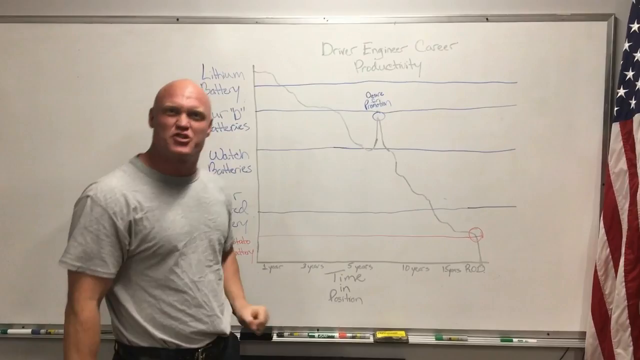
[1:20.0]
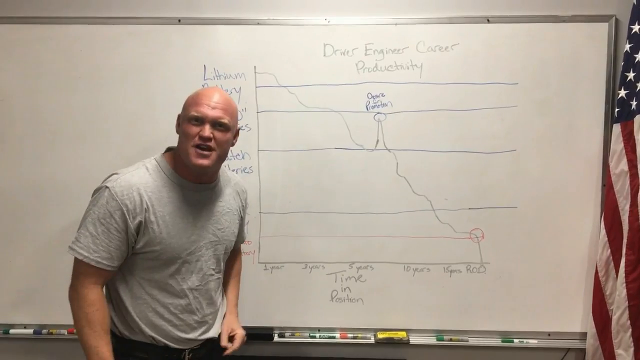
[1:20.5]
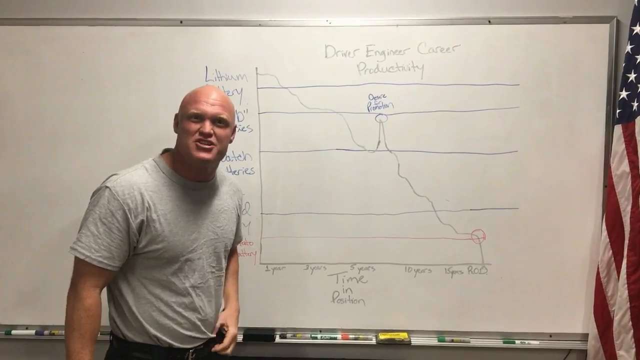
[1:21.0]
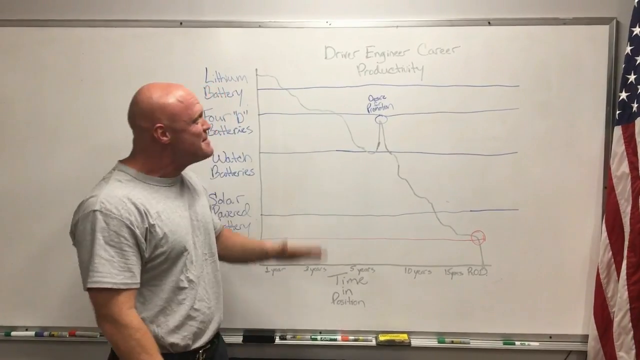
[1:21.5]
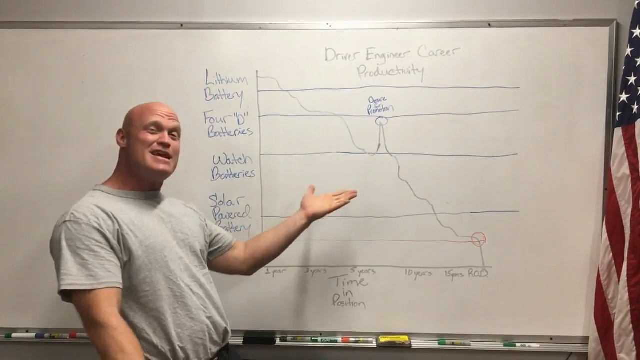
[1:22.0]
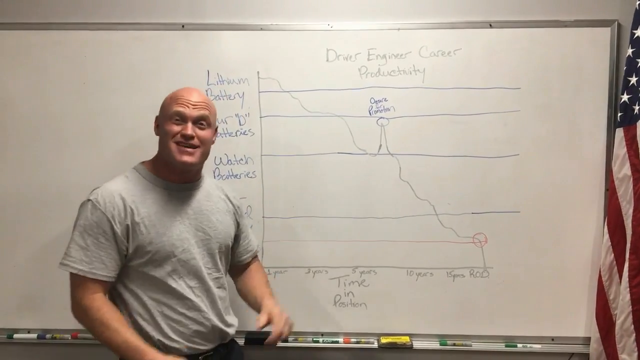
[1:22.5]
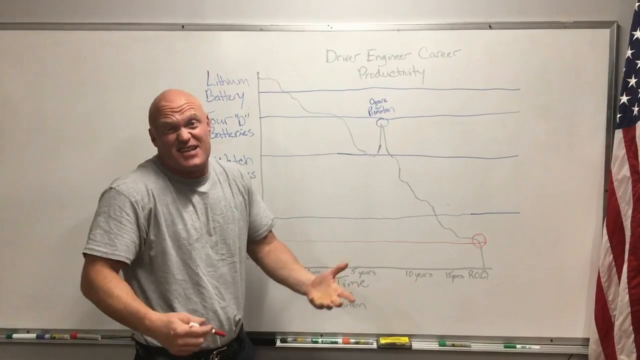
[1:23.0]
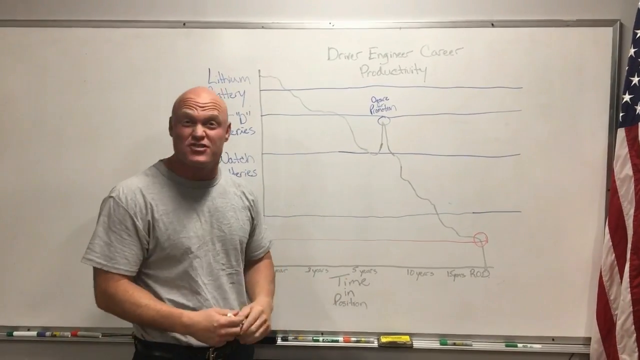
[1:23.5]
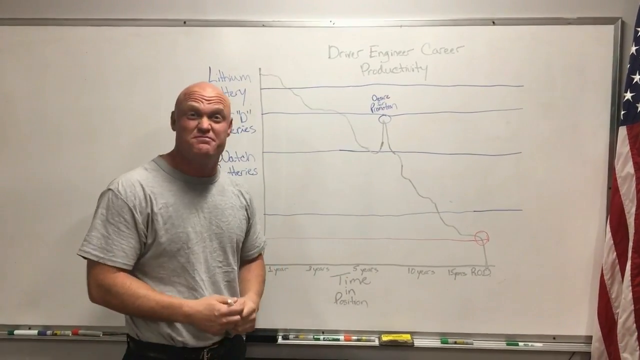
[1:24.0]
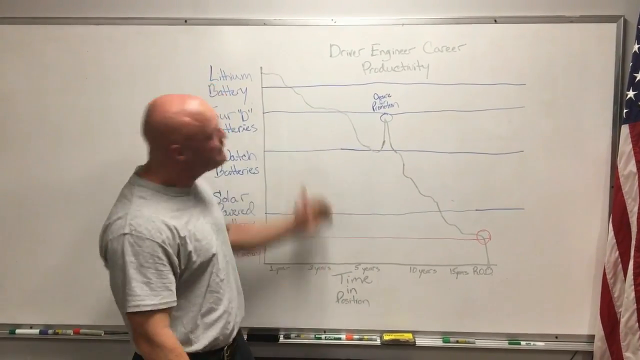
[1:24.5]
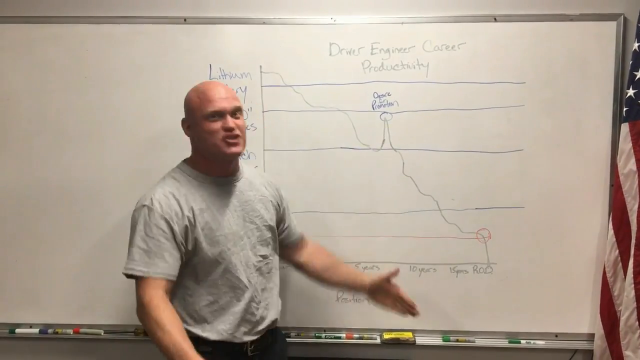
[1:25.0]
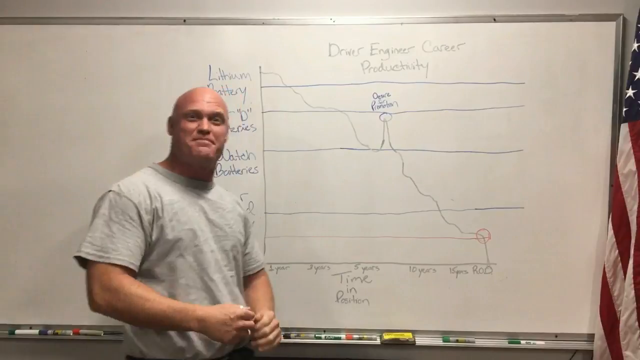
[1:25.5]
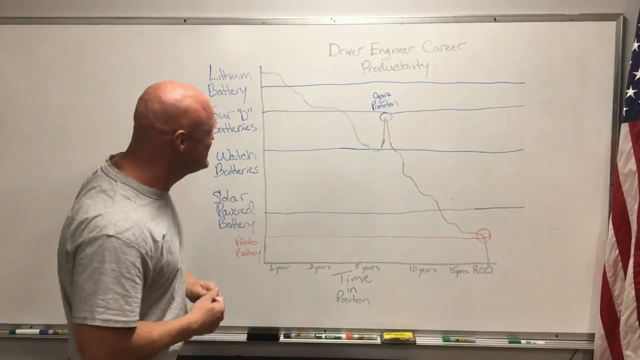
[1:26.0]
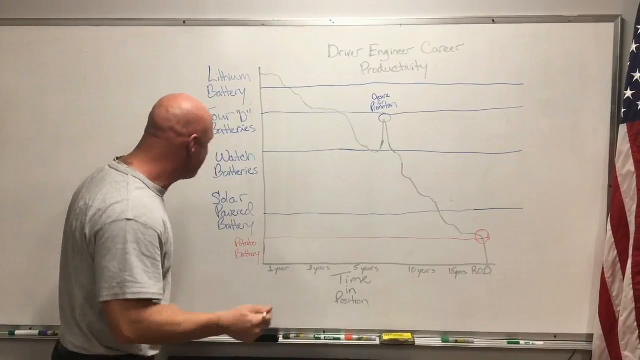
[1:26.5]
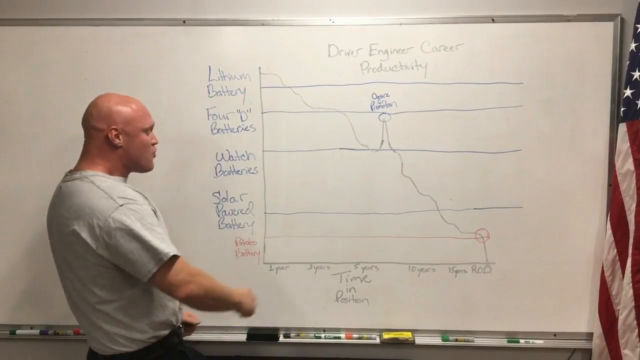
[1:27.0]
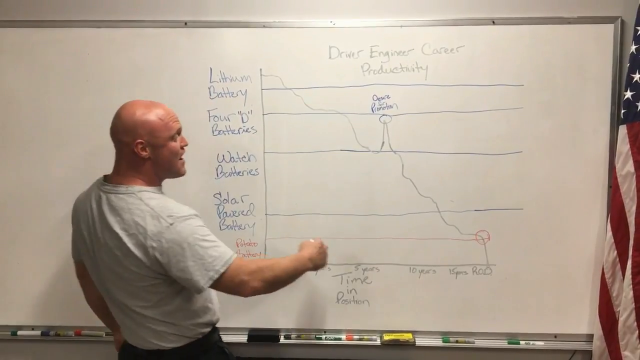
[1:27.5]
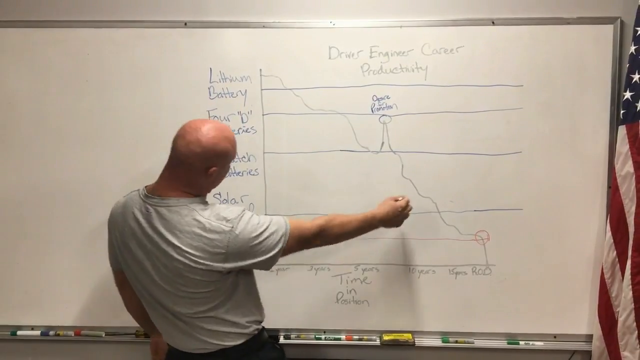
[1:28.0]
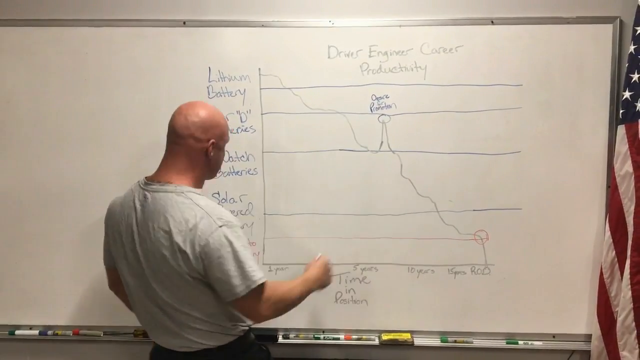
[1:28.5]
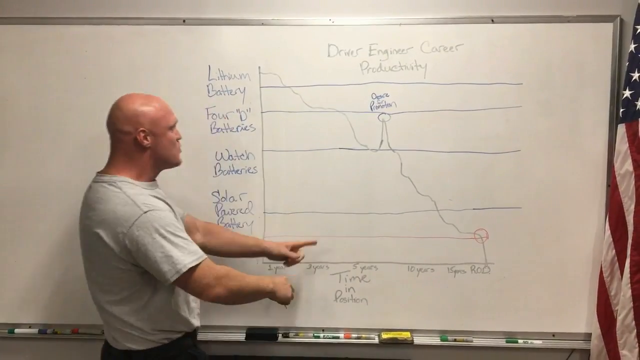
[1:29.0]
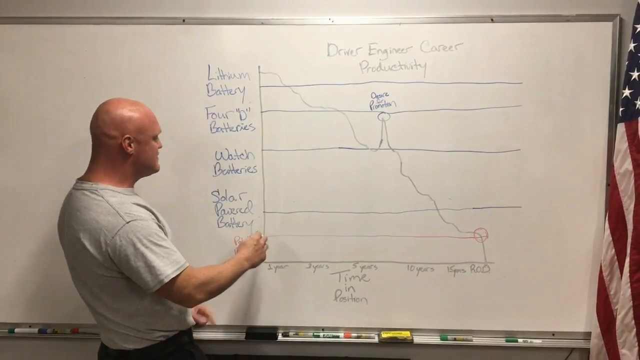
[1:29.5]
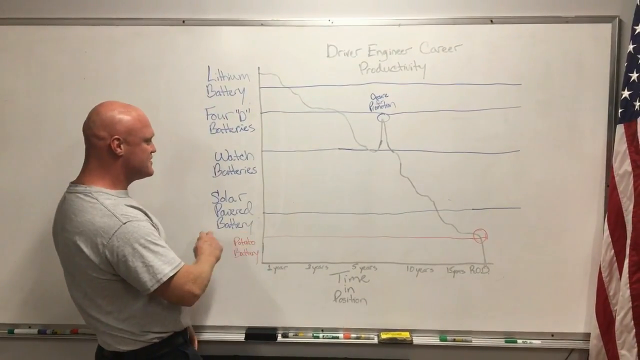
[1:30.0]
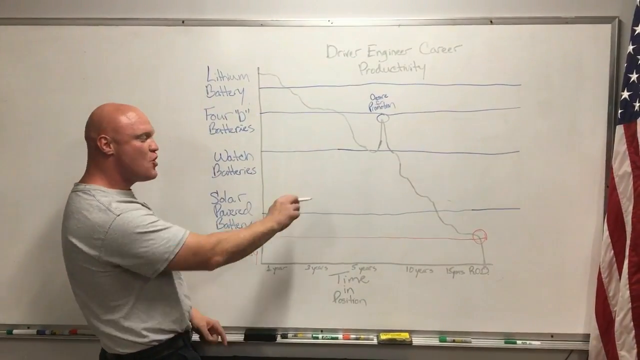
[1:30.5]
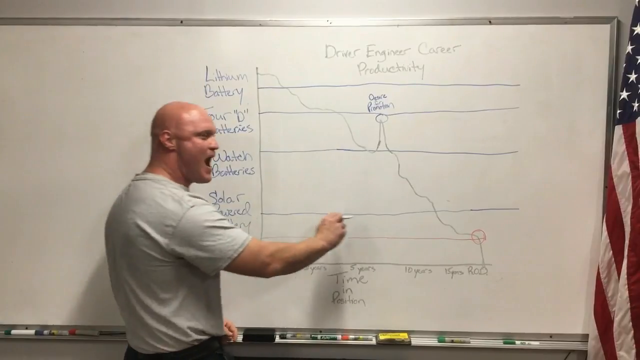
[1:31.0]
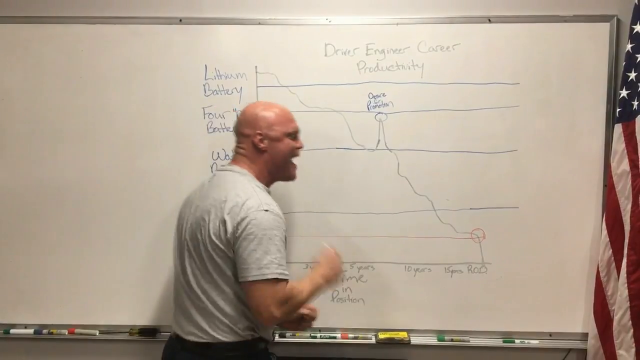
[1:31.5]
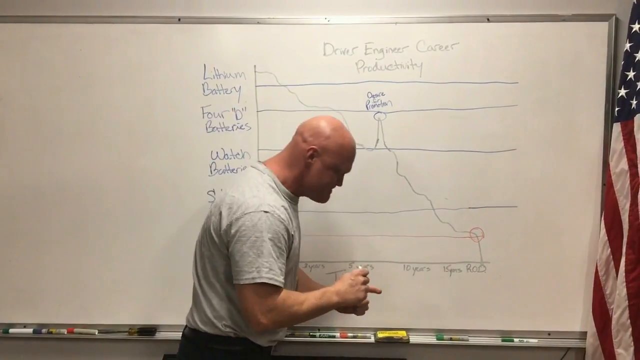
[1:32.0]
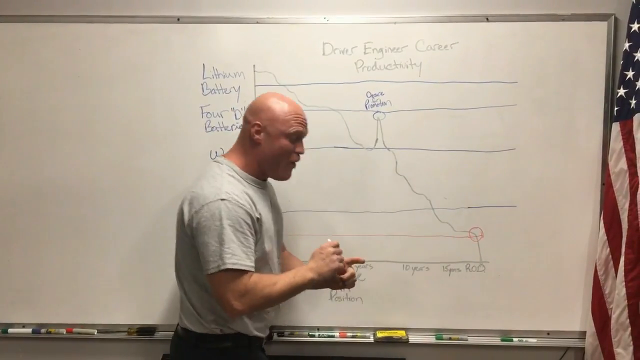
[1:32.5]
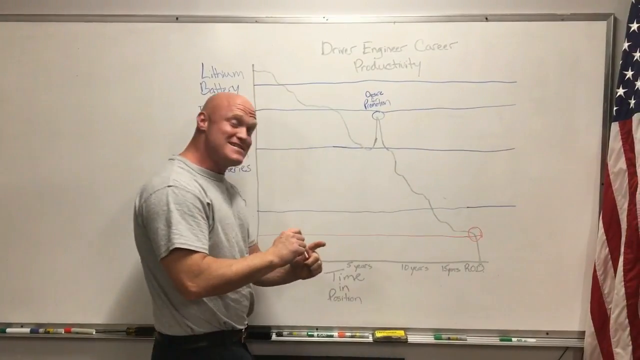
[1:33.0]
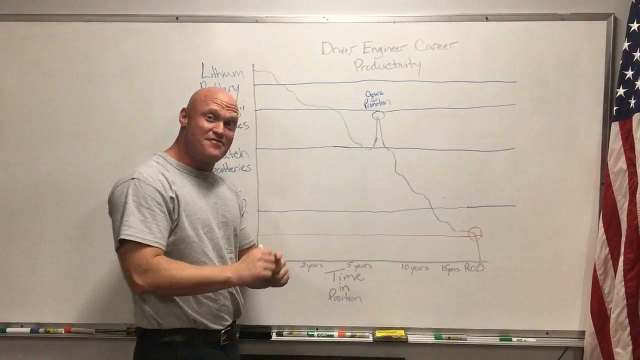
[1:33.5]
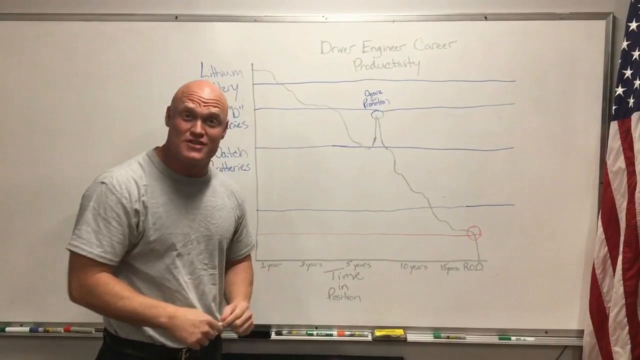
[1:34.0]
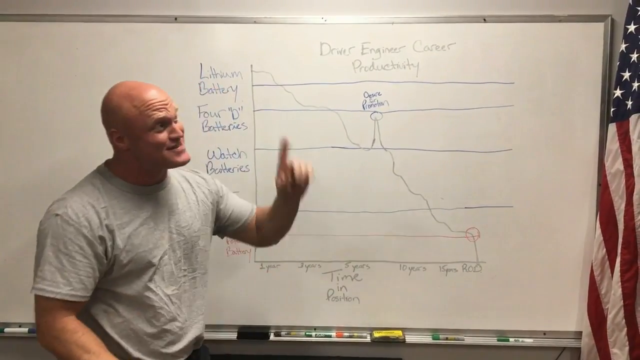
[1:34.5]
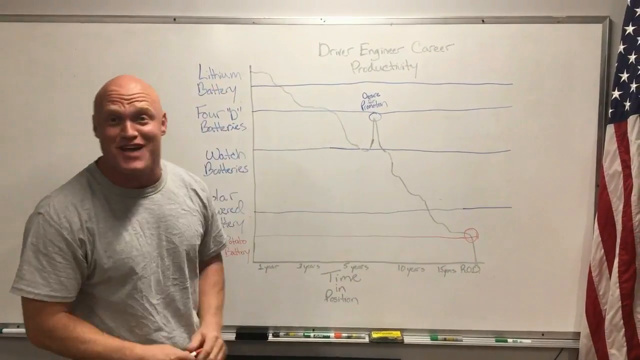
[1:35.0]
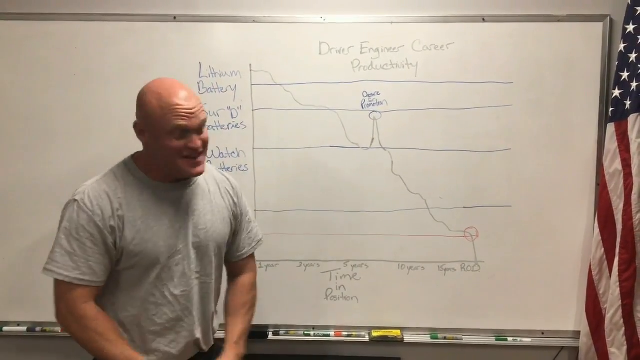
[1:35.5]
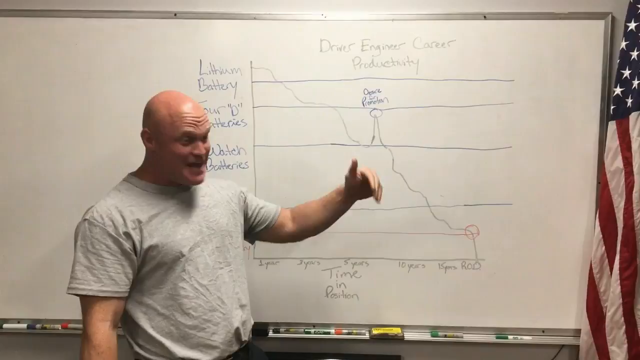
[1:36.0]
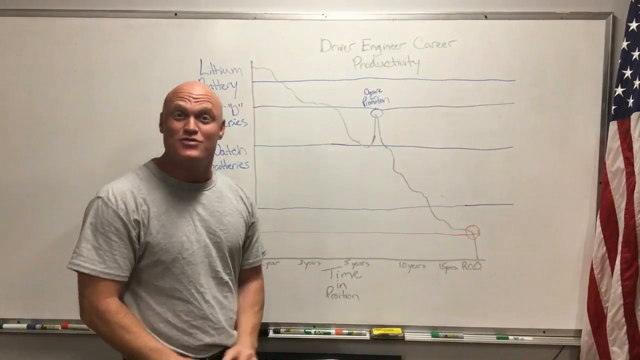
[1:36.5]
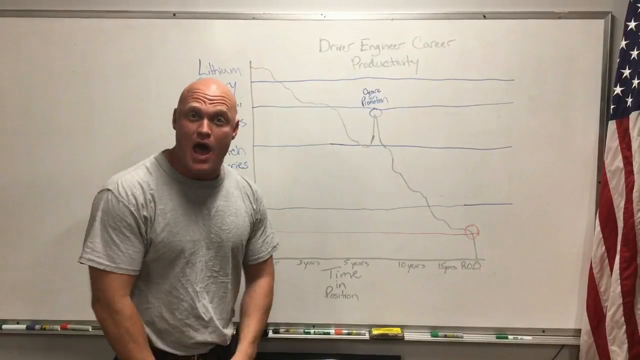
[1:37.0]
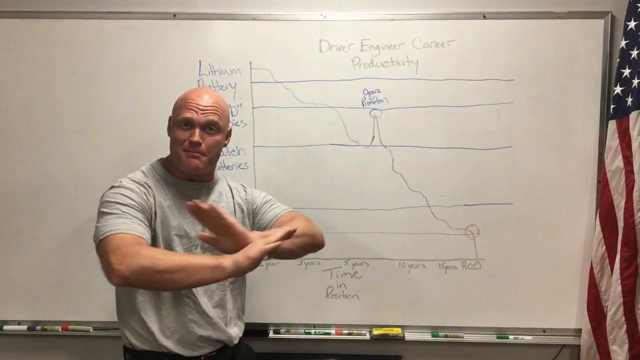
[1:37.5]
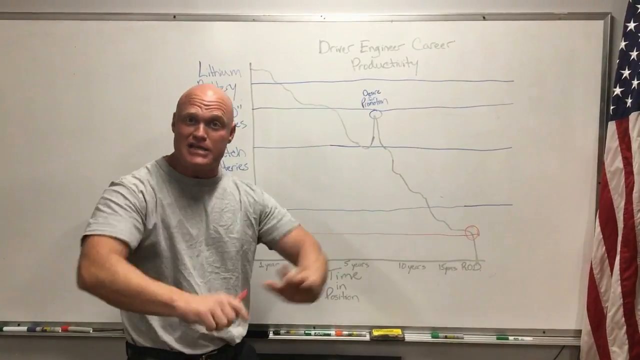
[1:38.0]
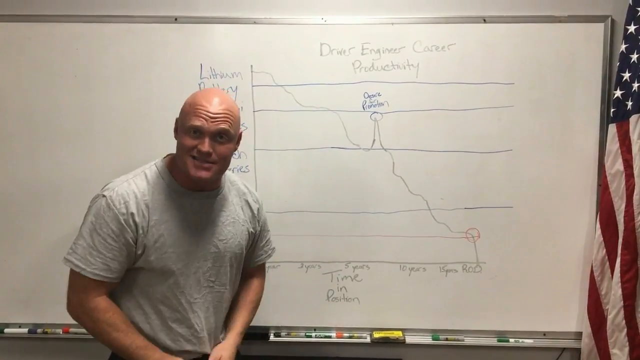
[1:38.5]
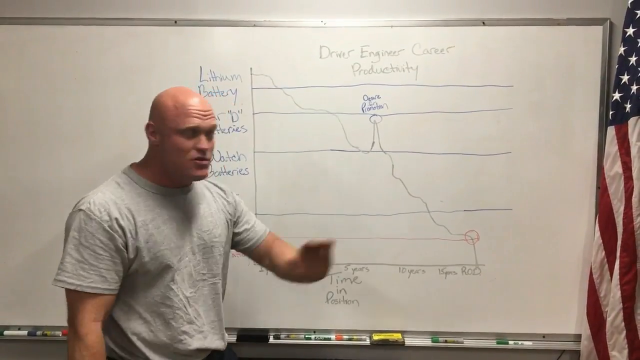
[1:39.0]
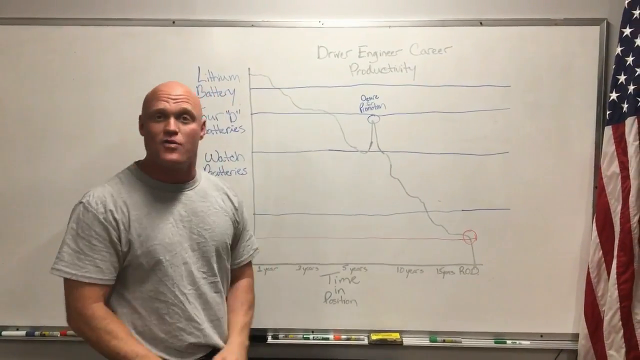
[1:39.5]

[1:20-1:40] The man looks directly into the camera with the graph behind him. He appears to say something very passionately and then appears to make a shrugging, questioning motion. He seems in good spirits, wearing his gray shirt and holding the red marker in his right hand. He makes a surfing, sliding motion with his left hand down the graph, very energetically. While talking, he looks back at the board and pretends to draw a squiggle somewhere along the lower center of the graph, then pretends to trace something while looking and talking. He continues talking for a while, using many different hand gestures and facial expressions. The American flag is still visible to the right of the whiteboard, and he has not written anything new on the board.